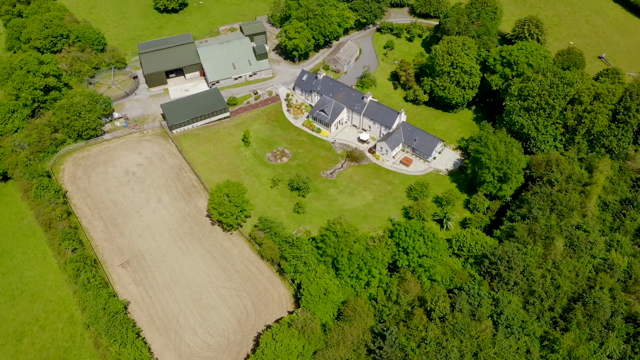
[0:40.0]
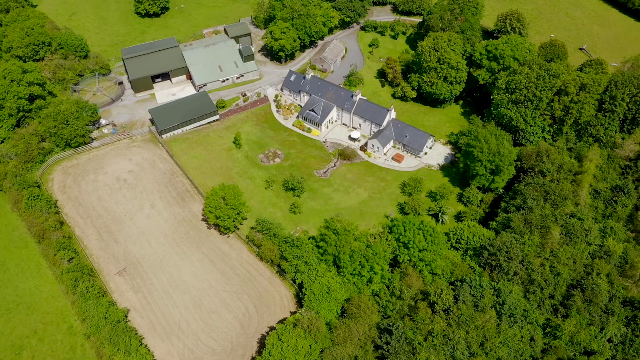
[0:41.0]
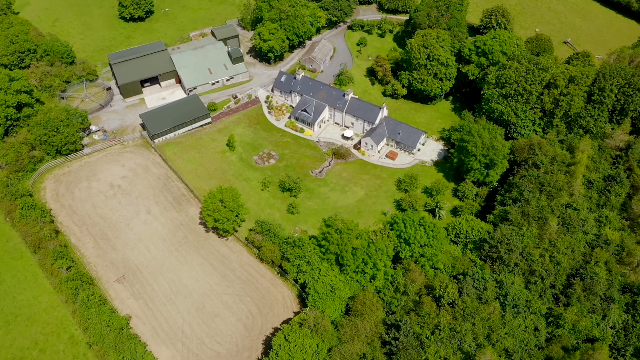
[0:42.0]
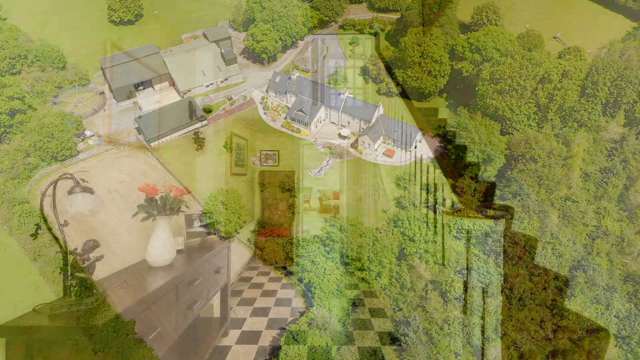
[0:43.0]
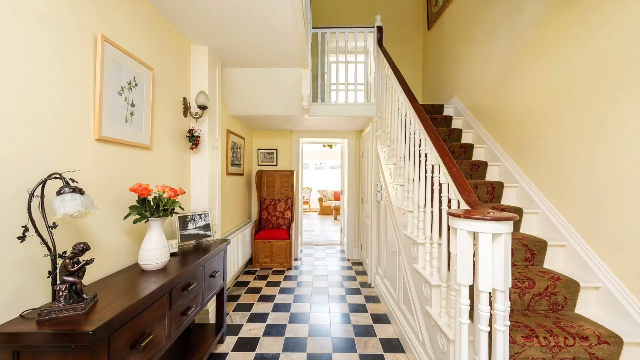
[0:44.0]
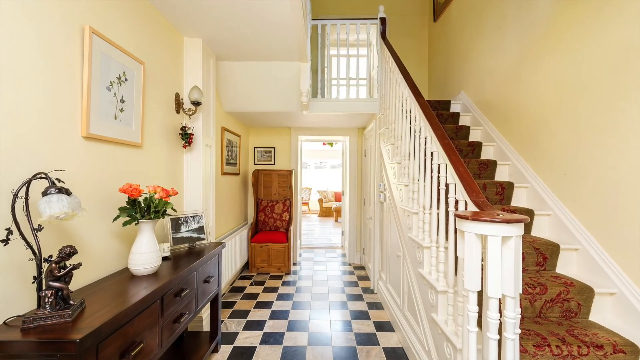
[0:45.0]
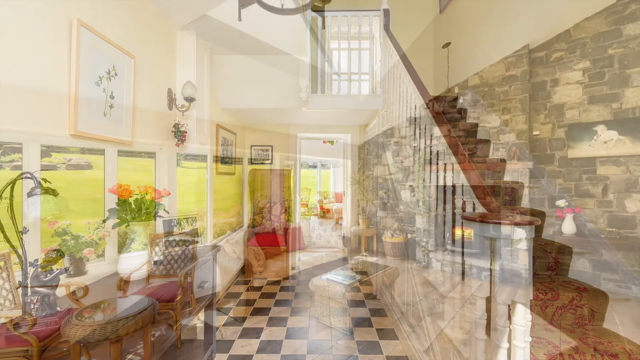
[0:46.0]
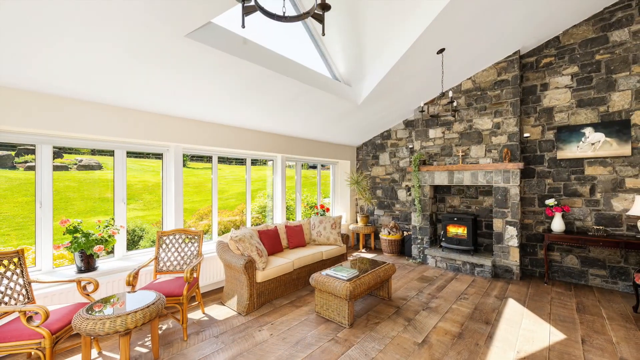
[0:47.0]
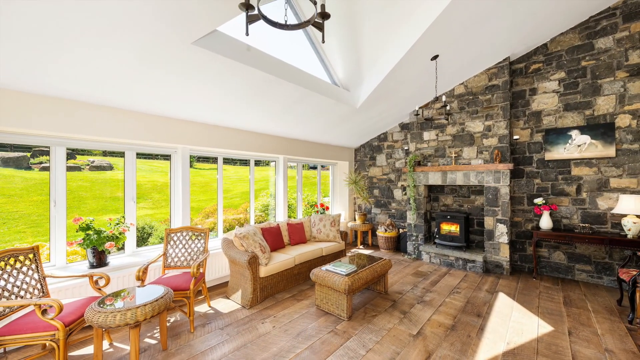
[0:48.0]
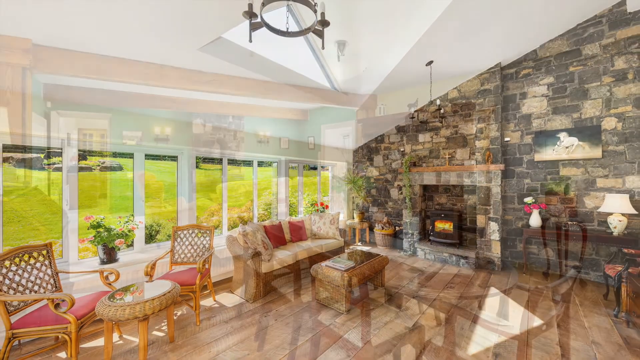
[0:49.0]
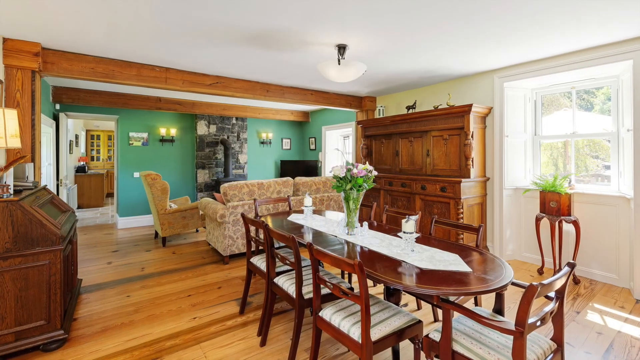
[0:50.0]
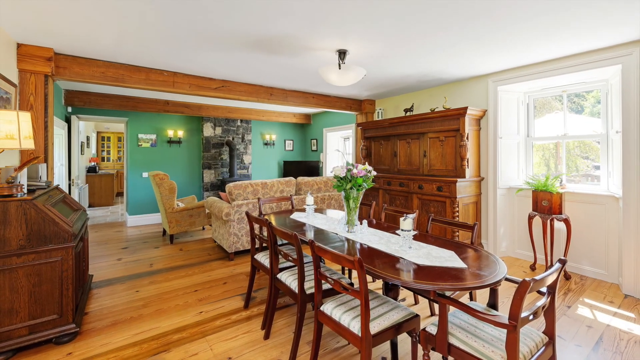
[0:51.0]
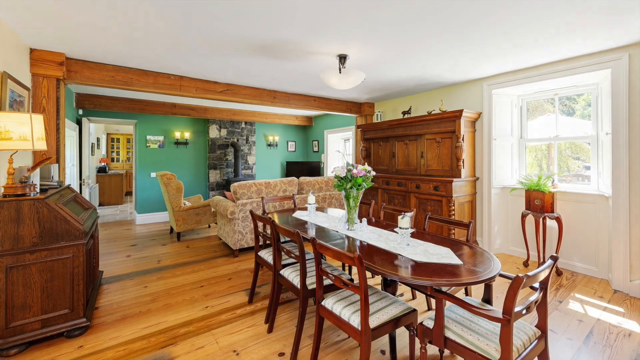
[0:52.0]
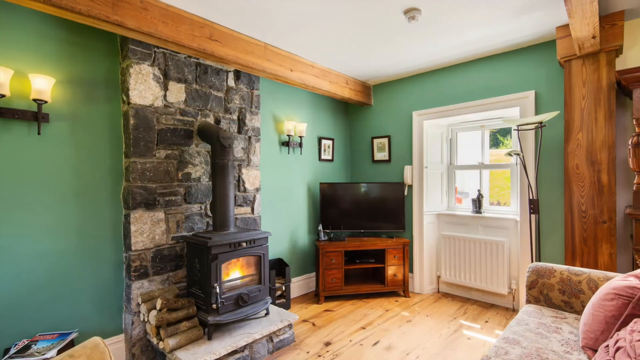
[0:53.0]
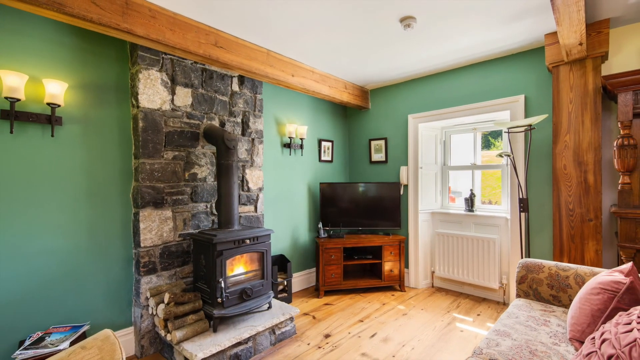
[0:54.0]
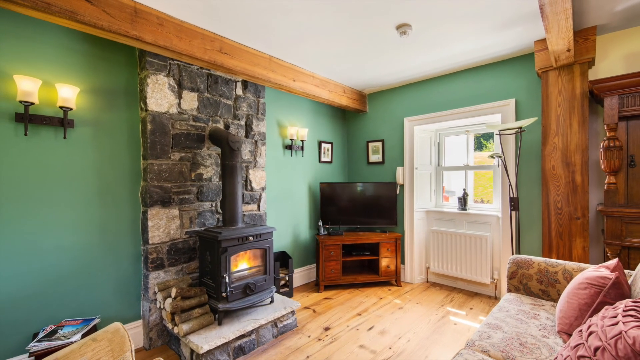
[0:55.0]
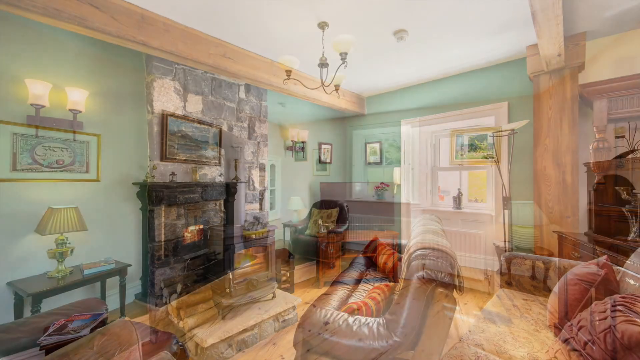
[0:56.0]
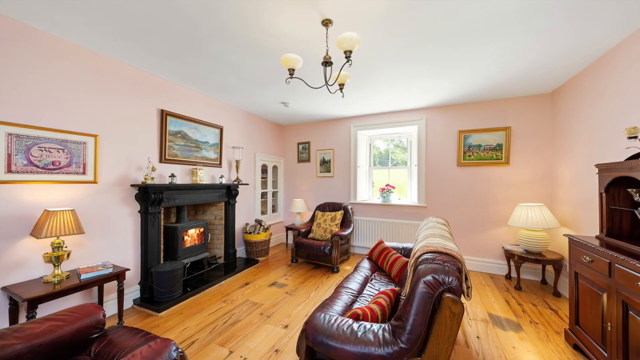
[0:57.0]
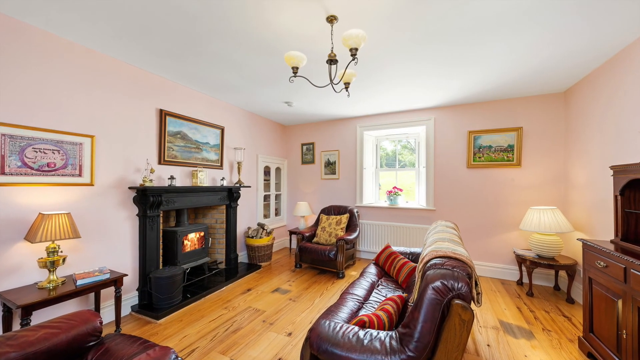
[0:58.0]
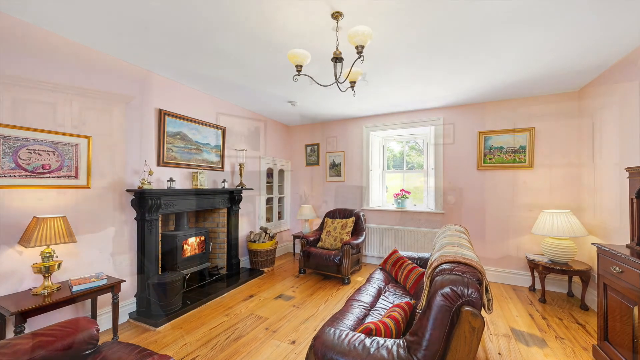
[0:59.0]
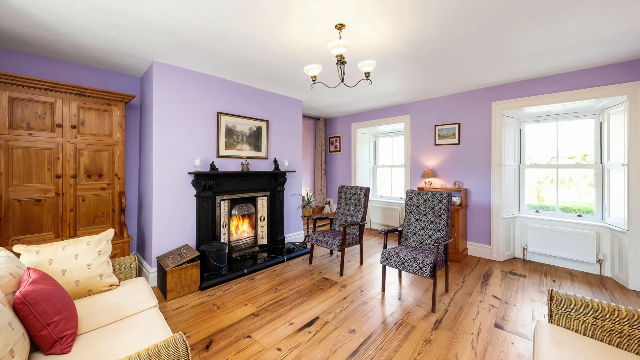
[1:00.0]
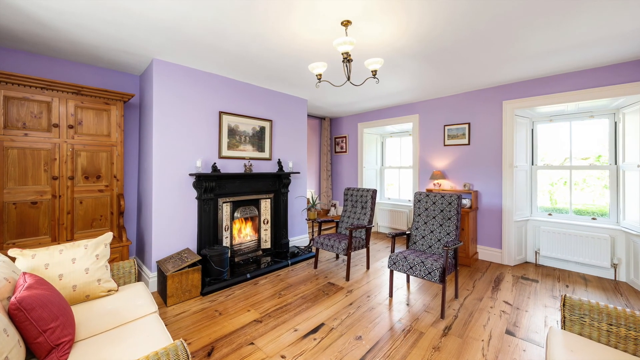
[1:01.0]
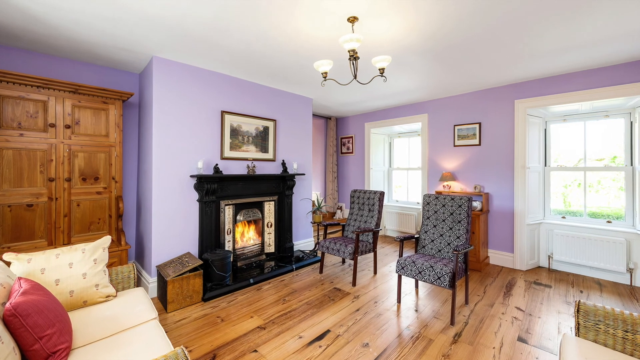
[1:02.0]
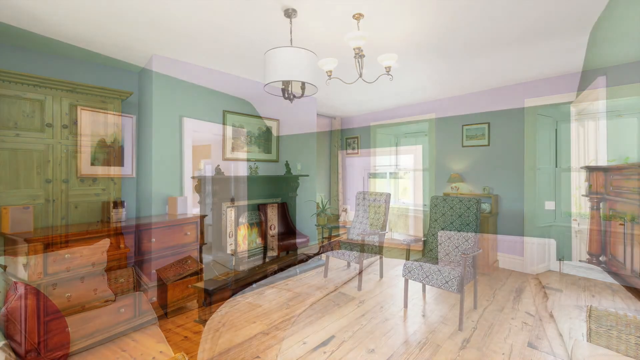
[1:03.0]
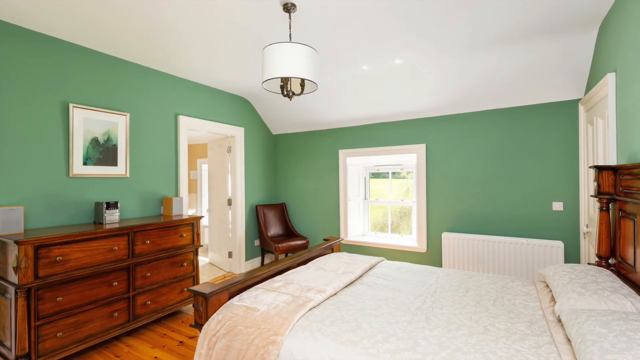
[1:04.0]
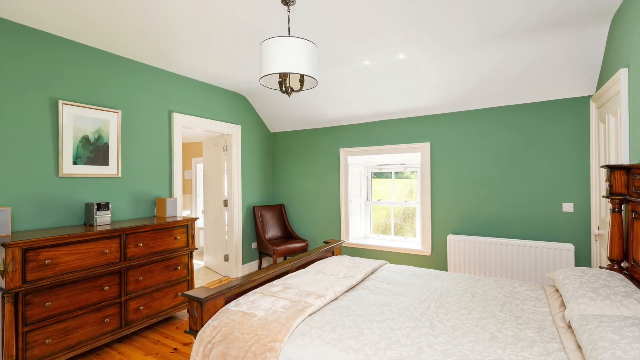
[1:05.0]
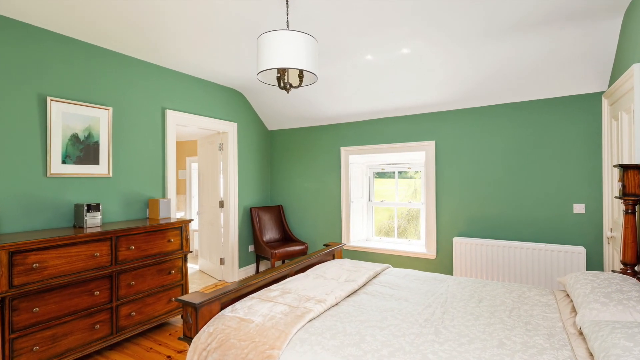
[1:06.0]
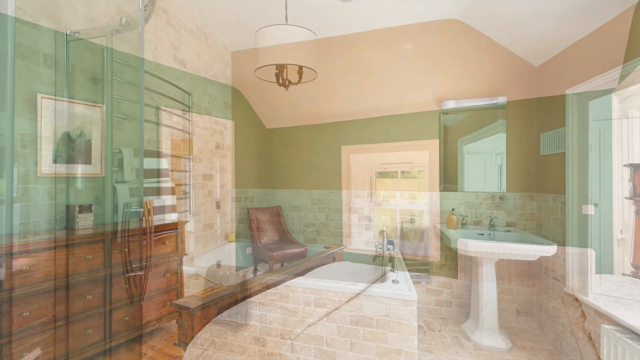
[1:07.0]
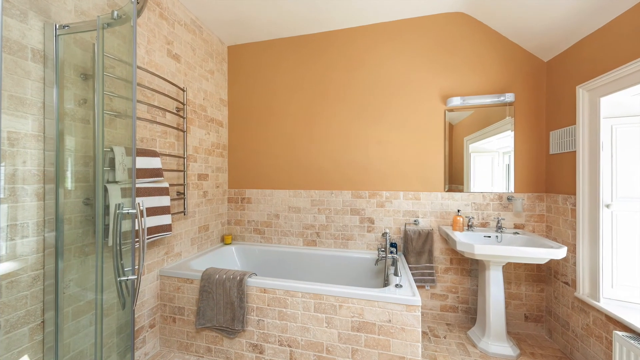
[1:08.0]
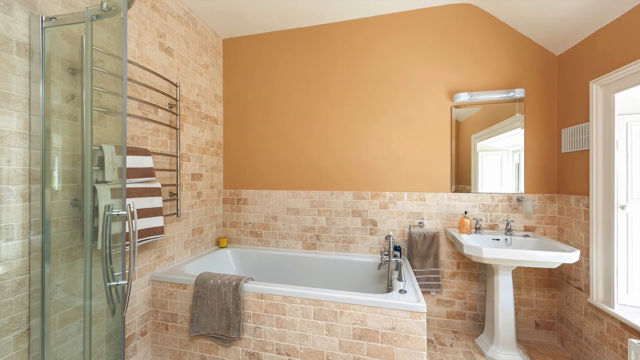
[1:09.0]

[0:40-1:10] After an overhead shot of the building, the video goes inside, probably through the main entrance. On the right, a staircase leads up to a second floor. The stairs are white, with a brown and red sort of carpet draped over them except on the very right section, which has no carpet. Below the stairs there is room for cabinets. The floor is checkered black and white. On the left is a small brown table with a vase of flowers, a picture of a painting, a framed photo, and some other items. Beside the doorway into the living room, or wherever the entrance leads, is a guest chair with a red cushion and a wooden frame. The video cuts to the living room, where a sofa has red and light brown cushions and pillow cushions. To its left is a round table with a mirror on top and two seats beside it, and to the right is a fireplace that seems to be fake or electric. Next is the dining room area: a long, brown table with circular ends, with three seats on each side and one at each end. A little piano nearby is covered, and beside it are some living room seats or sofas, with a television in the corner and another fireplace beside it.